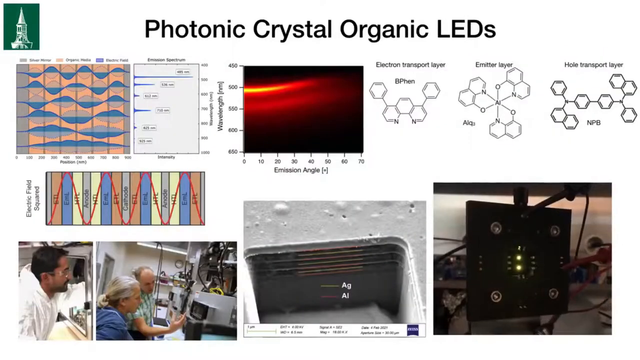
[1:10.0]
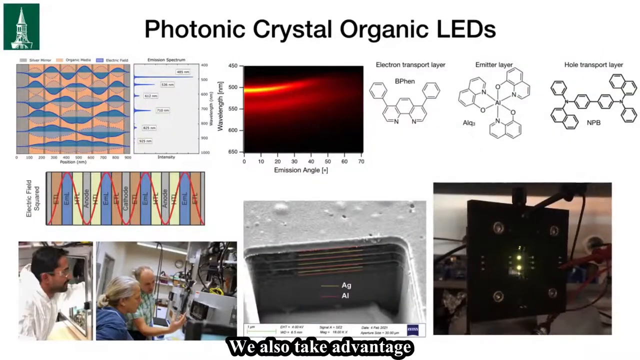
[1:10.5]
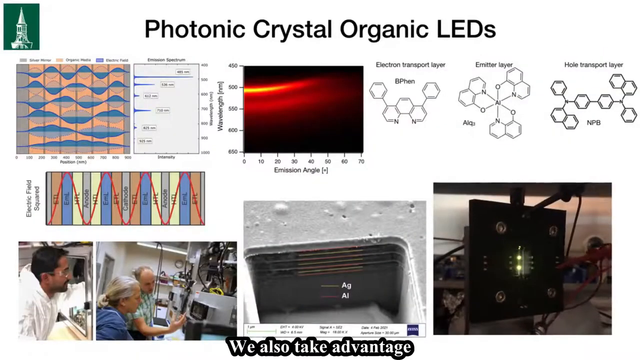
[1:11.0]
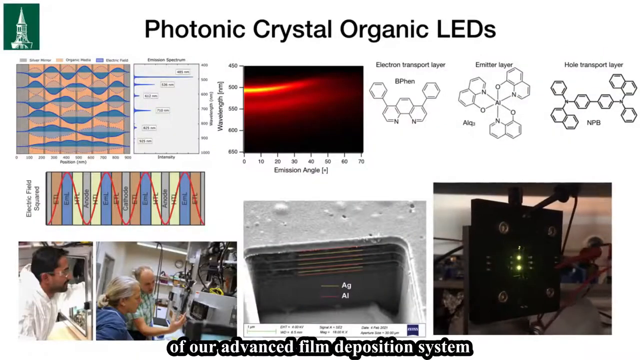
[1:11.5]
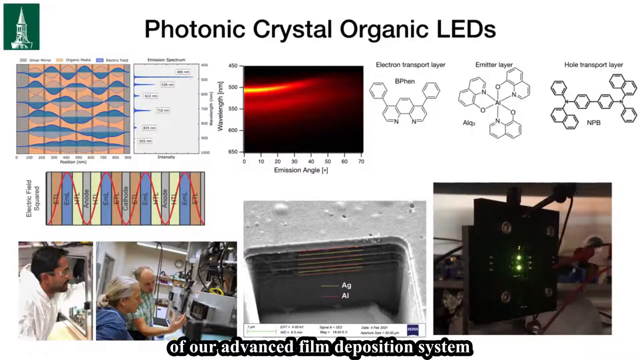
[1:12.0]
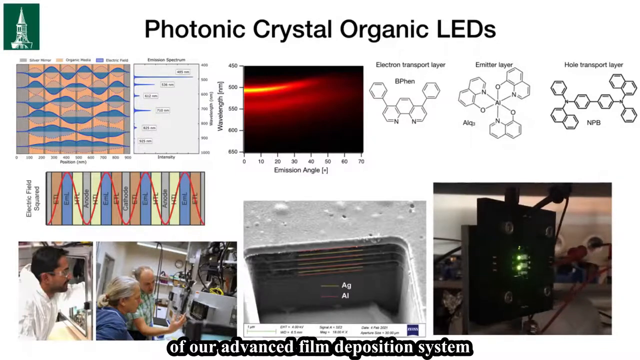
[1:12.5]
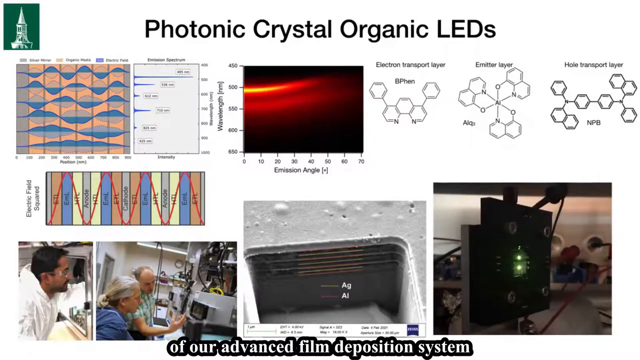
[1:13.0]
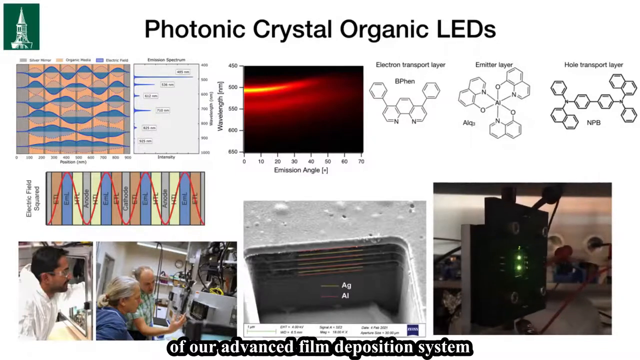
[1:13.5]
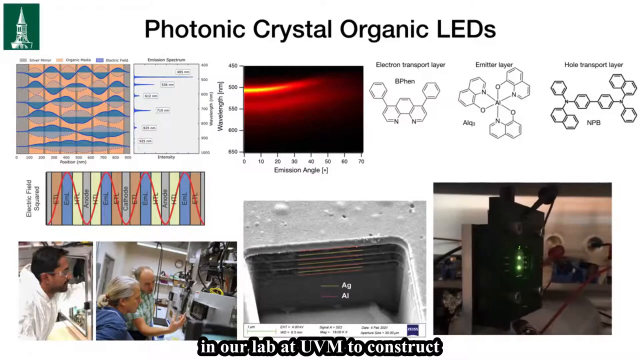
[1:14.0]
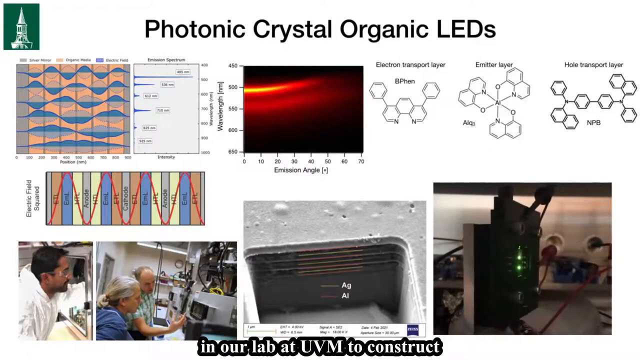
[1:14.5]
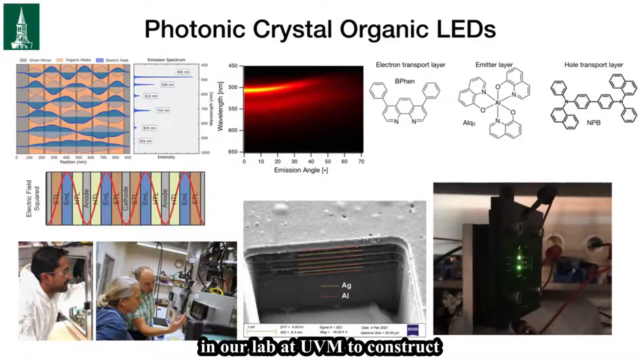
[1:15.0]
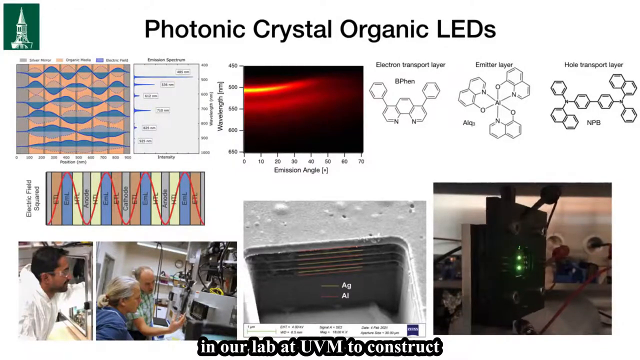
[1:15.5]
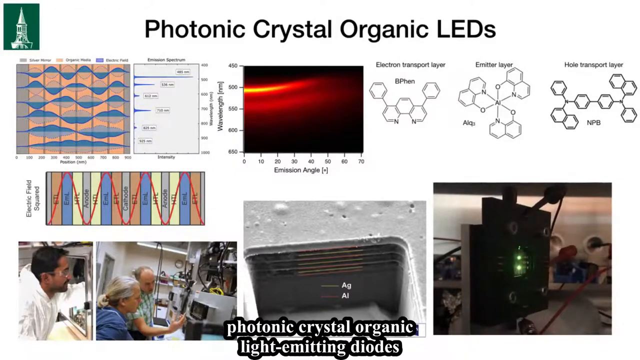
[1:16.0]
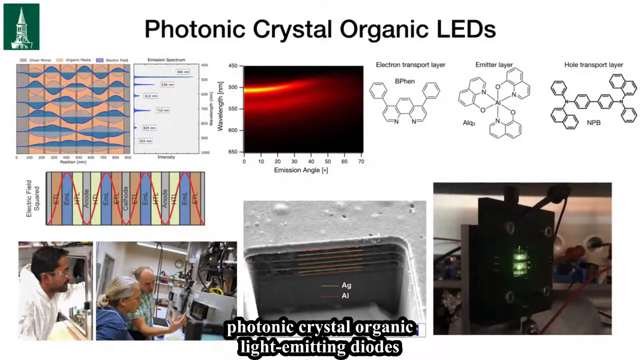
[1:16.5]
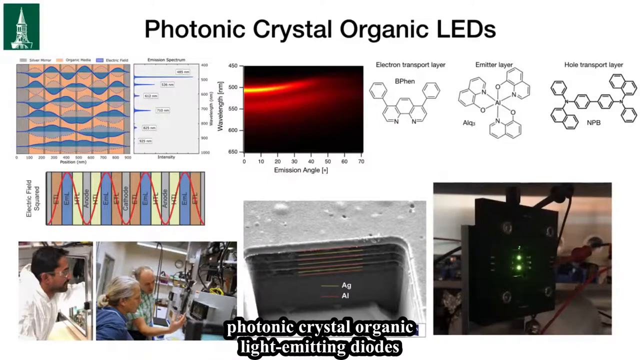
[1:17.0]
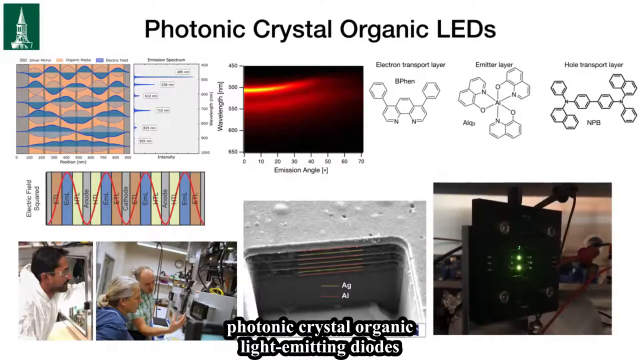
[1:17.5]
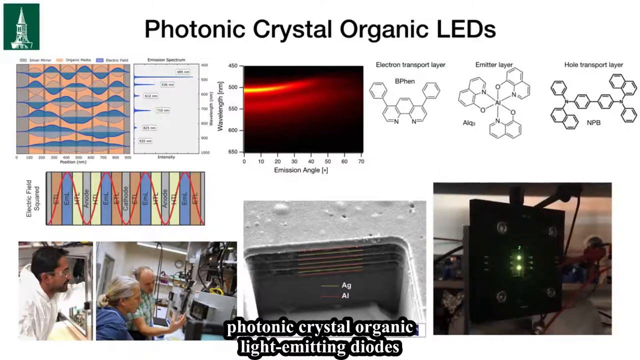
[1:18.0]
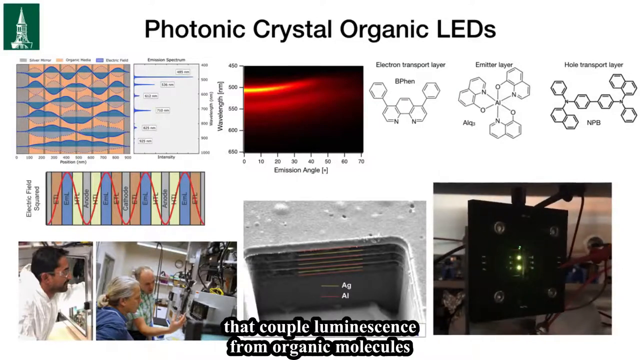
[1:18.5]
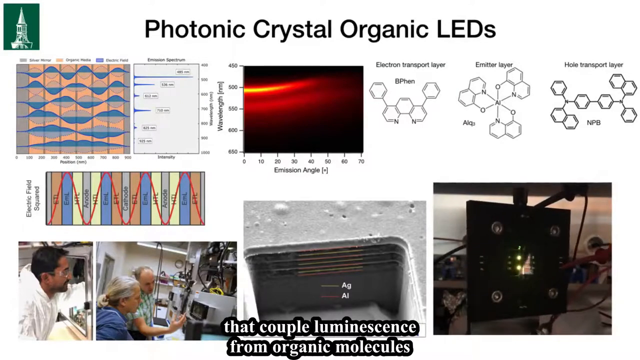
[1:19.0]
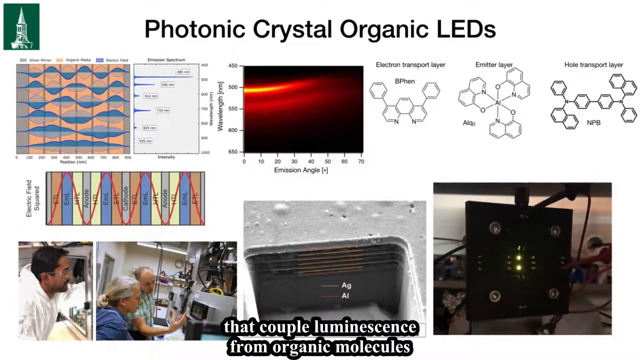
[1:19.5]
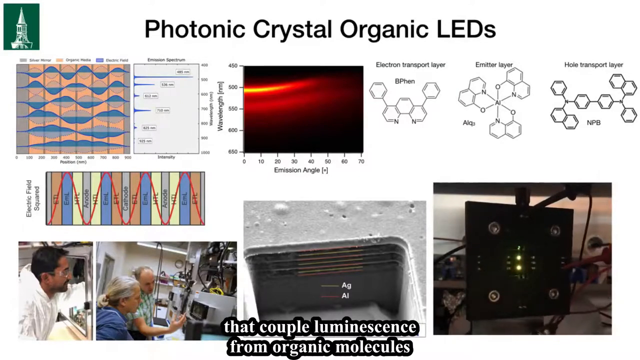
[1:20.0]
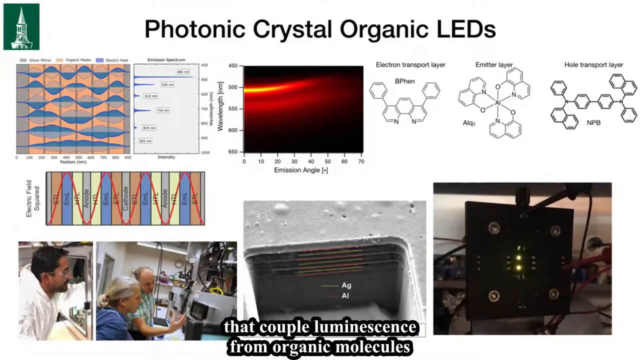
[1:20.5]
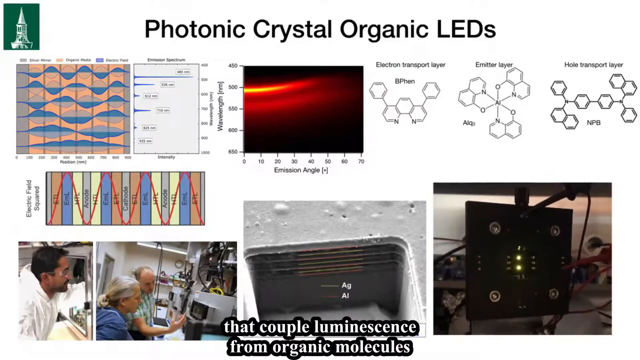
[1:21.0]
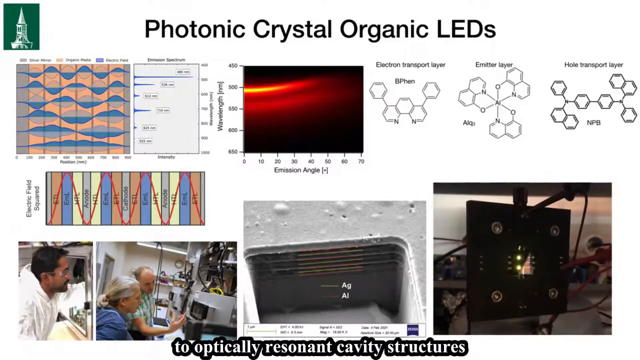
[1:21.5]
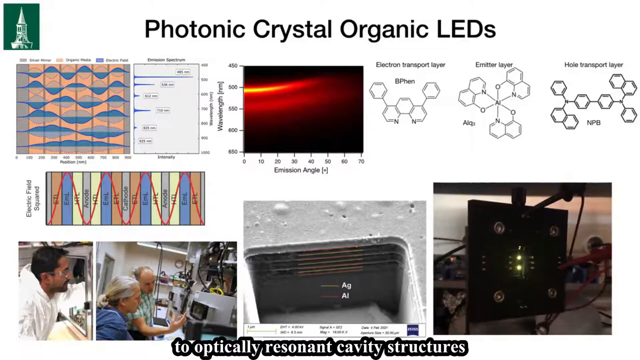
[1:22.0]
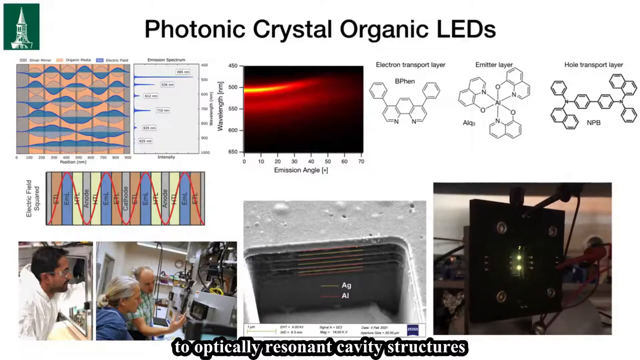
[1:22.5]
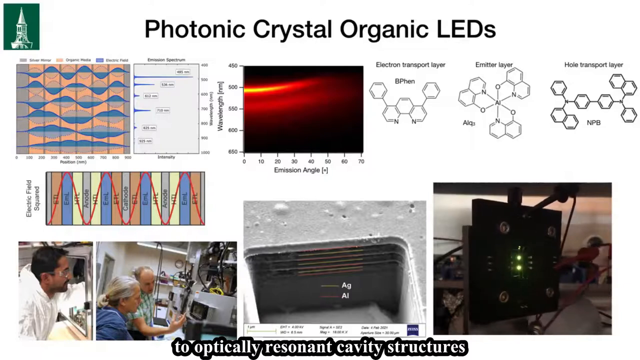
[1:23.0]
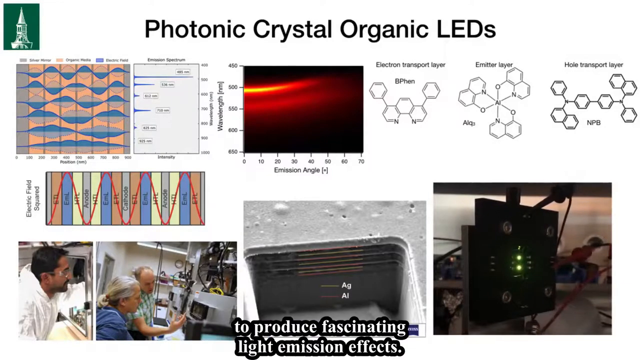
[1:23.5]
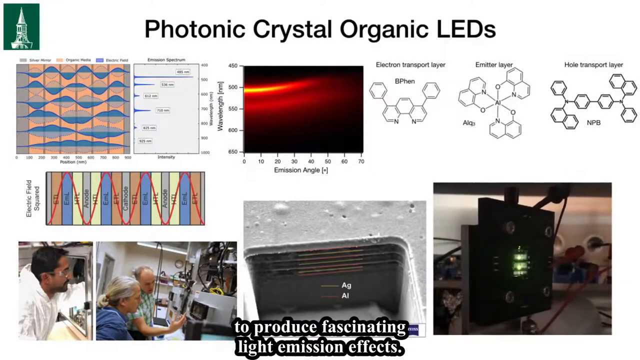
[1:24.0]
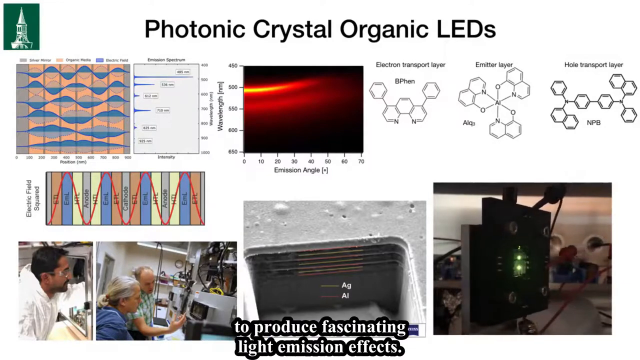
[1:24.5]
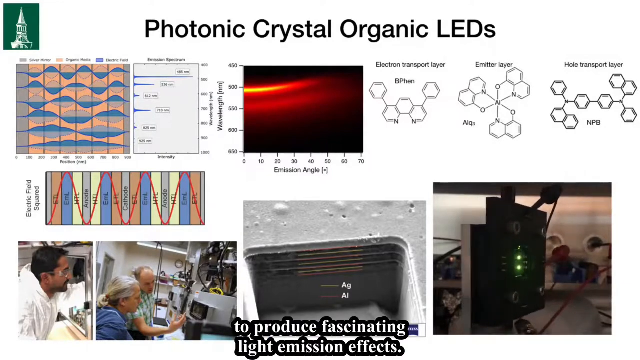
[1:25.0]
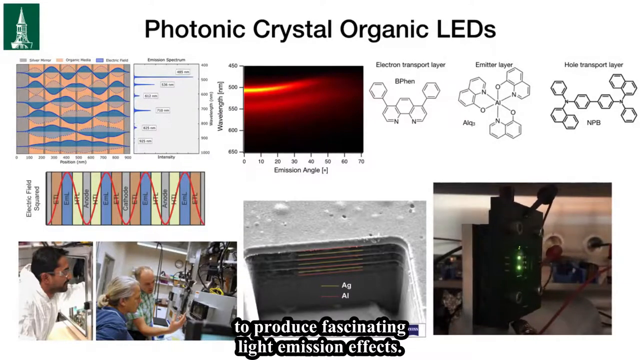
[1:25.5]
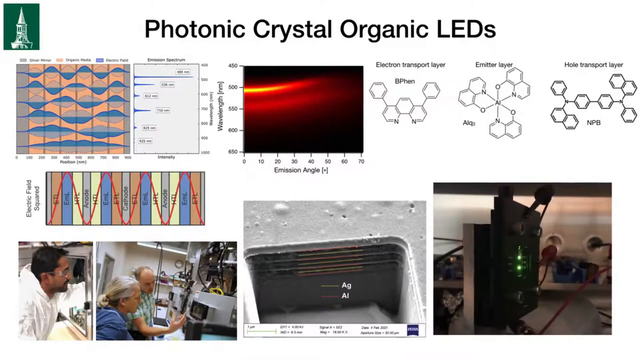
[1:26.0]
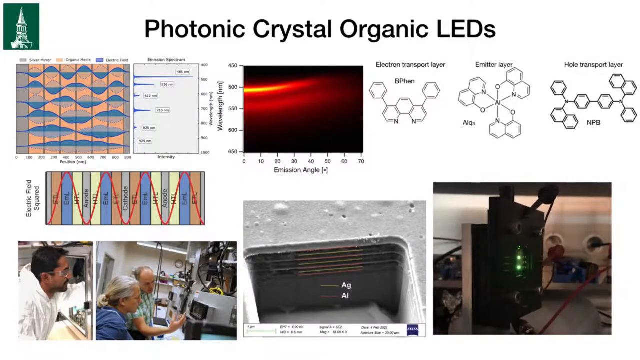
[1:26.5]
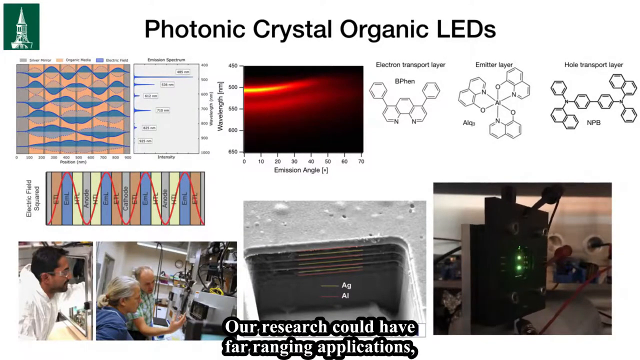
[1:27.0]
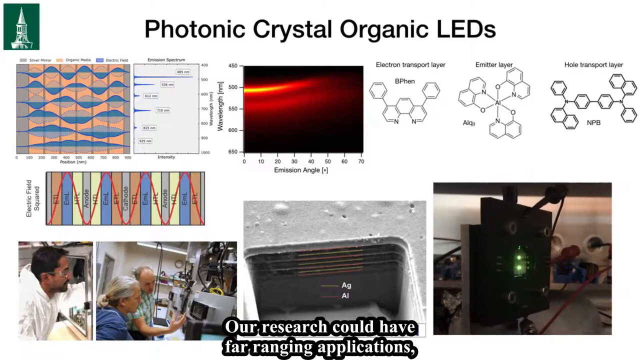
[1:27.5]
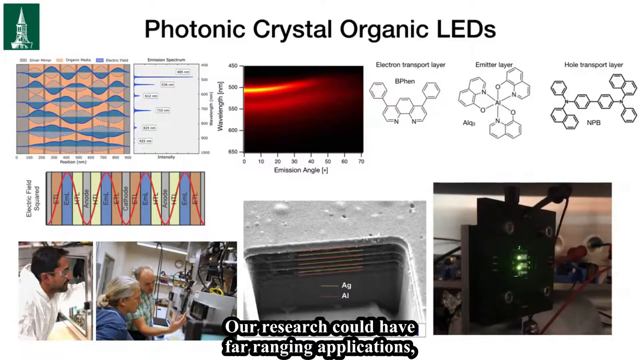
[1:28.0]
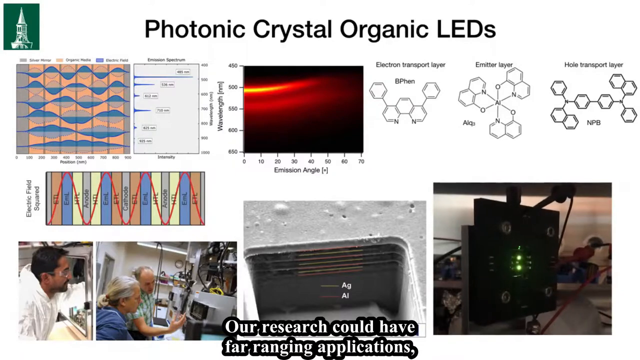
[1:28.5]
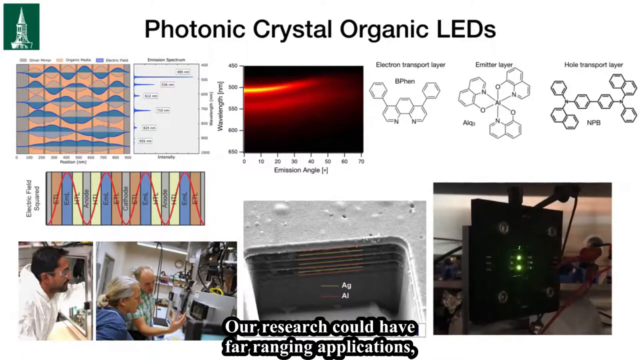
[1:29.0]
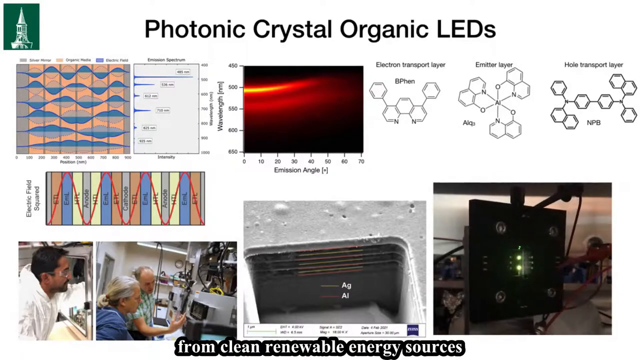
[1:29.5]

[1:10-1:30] Assistant Professor Matthew White talks about photonic crystal organic LEDs, with several images on his slideshow. The University of Vermont logo is in the upper right-hand corner. There are several graphs, one of which appears to be a bar graph. He talks about the electron transport layer, the emitter layer and the hole transport layer. There is an image of individuals working in a lab, and a graphic that says "electric field squared" with a number of squiggly lines. He talks about light-emitting diodes from organic molecules that produce fascinating light emission effects and says their research could have far-reaching impact.